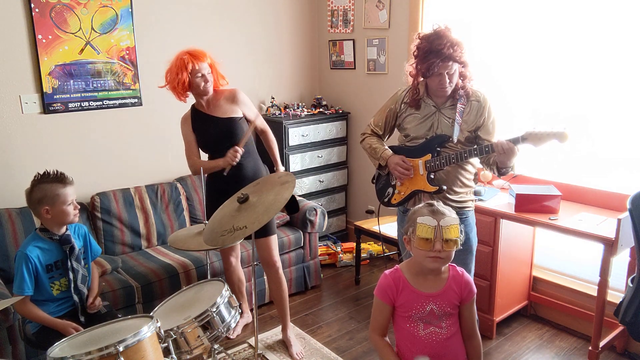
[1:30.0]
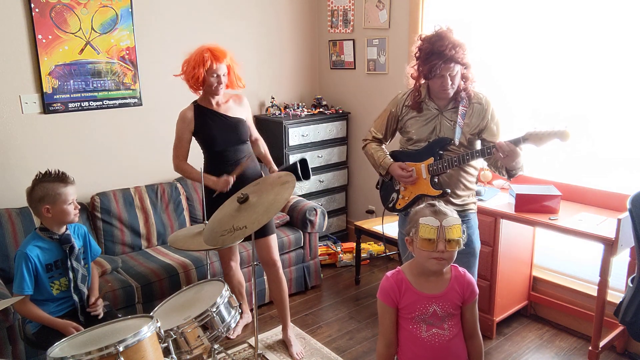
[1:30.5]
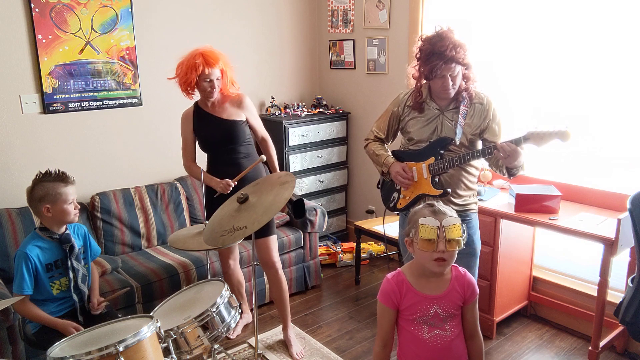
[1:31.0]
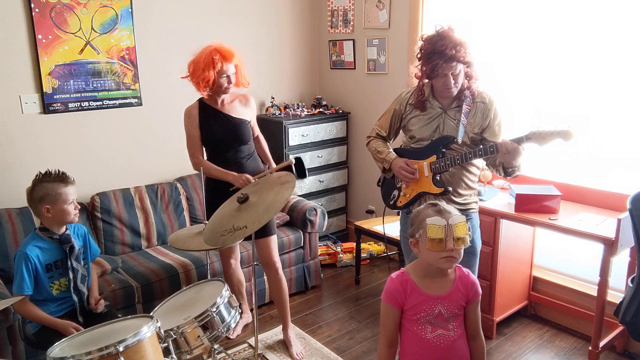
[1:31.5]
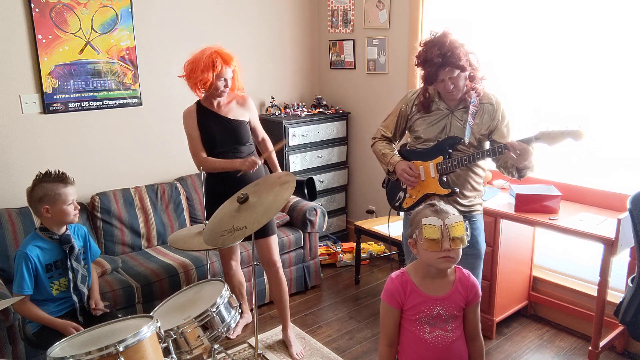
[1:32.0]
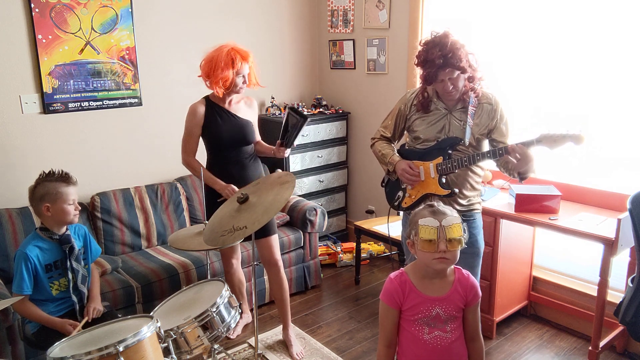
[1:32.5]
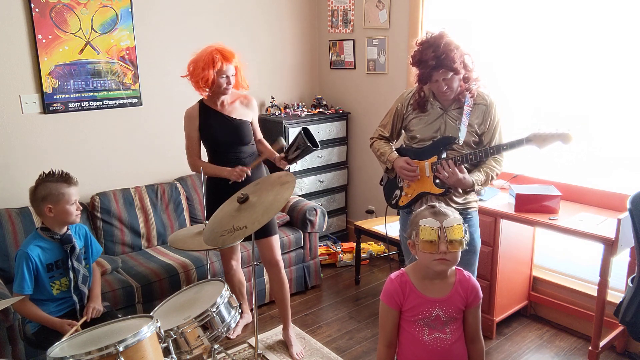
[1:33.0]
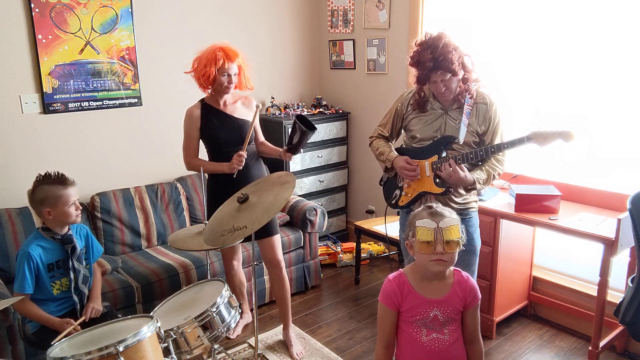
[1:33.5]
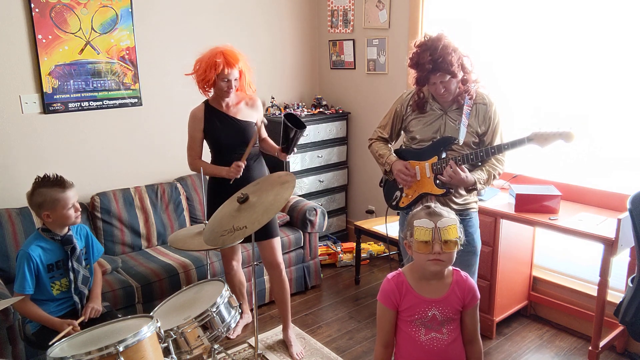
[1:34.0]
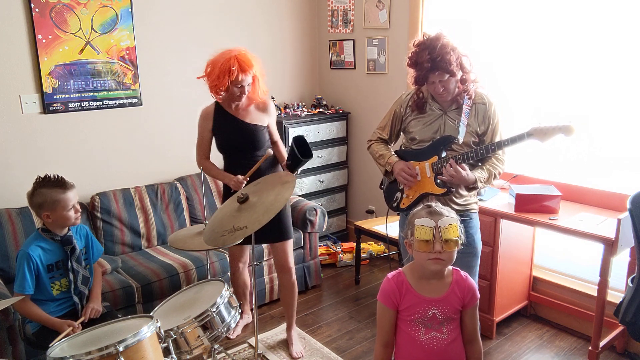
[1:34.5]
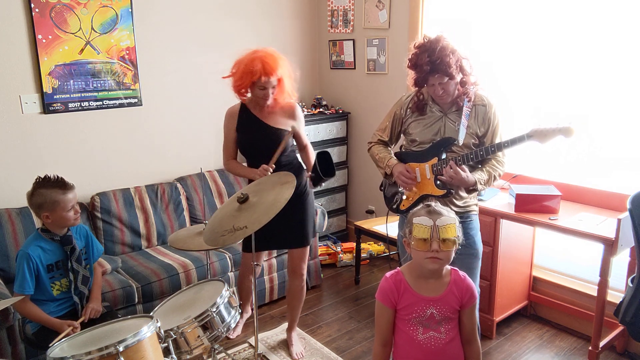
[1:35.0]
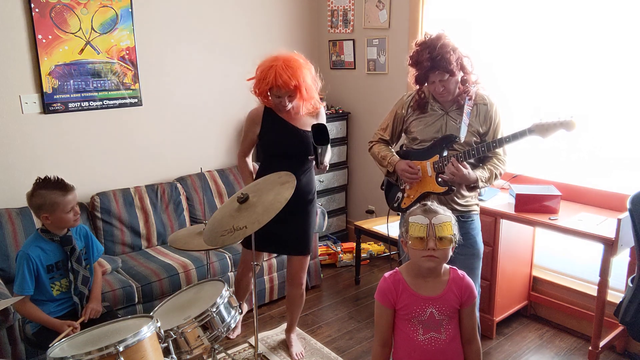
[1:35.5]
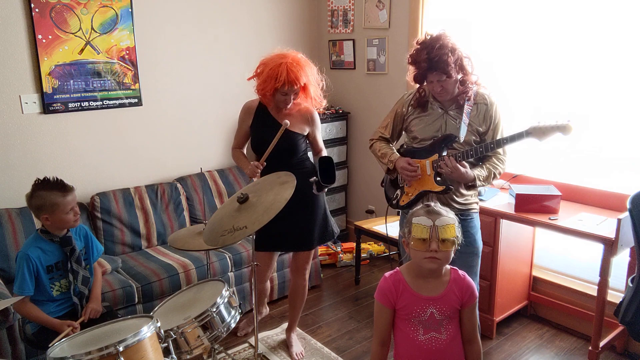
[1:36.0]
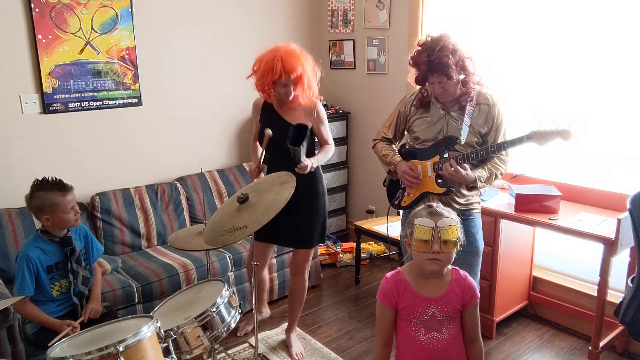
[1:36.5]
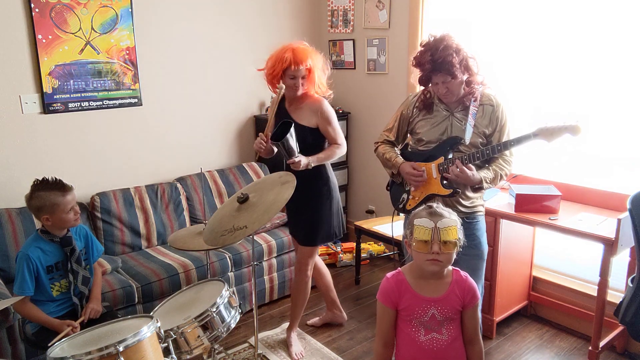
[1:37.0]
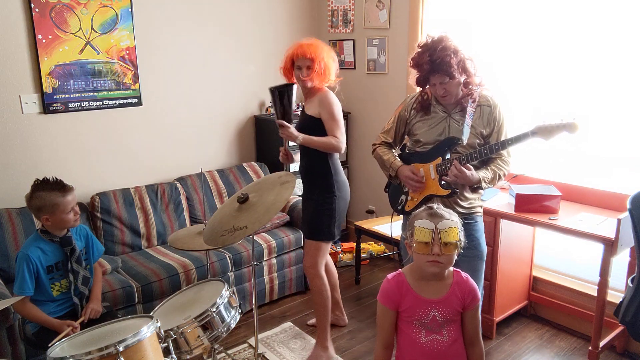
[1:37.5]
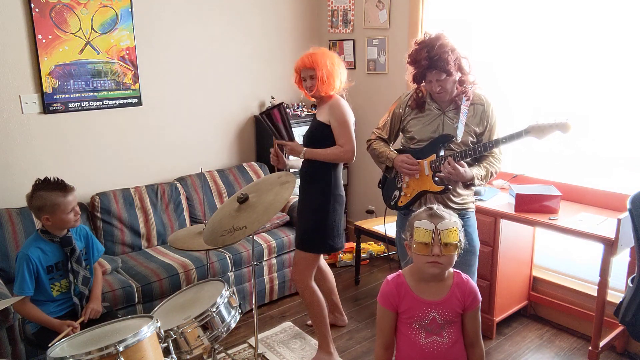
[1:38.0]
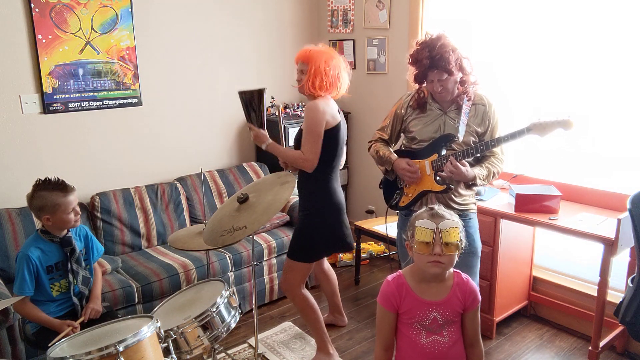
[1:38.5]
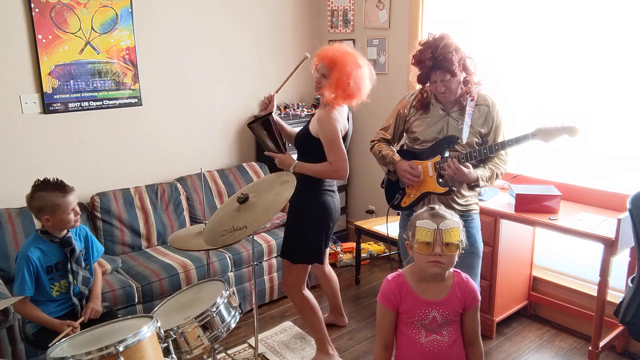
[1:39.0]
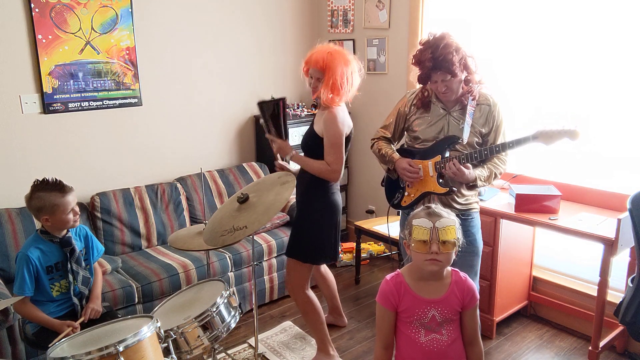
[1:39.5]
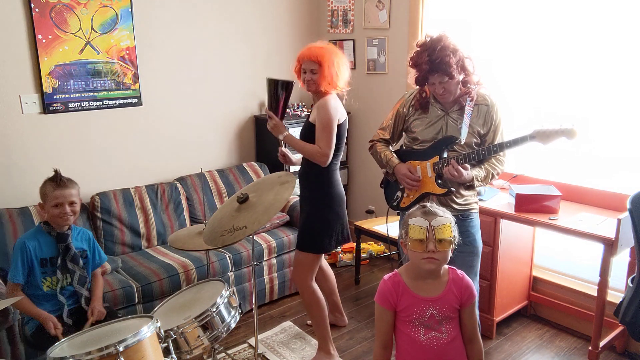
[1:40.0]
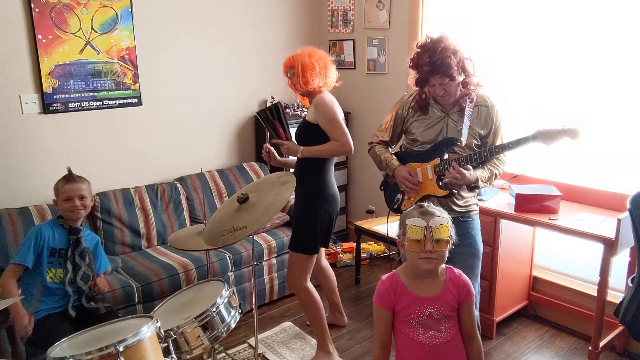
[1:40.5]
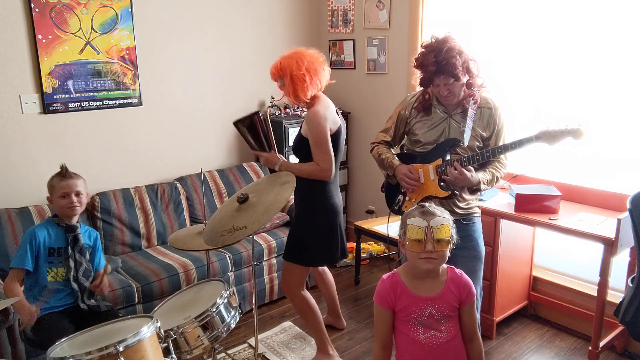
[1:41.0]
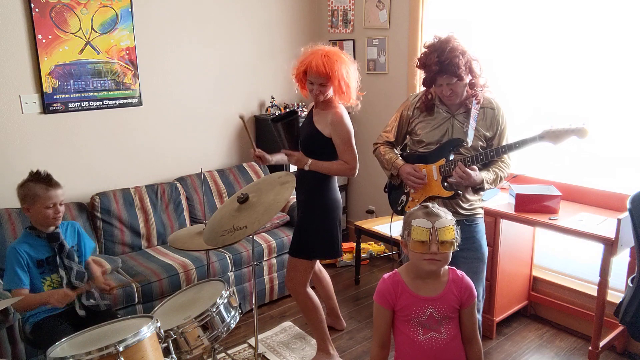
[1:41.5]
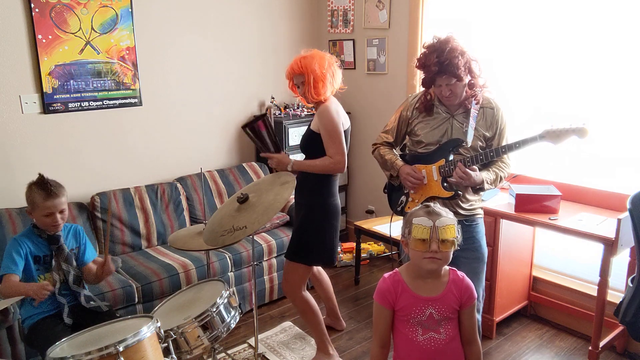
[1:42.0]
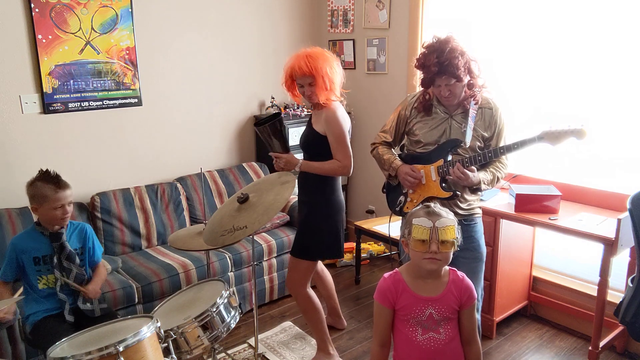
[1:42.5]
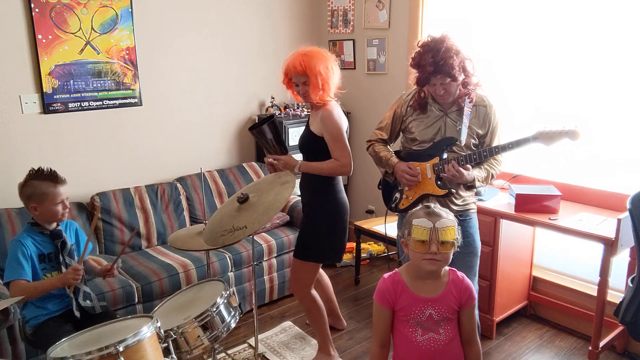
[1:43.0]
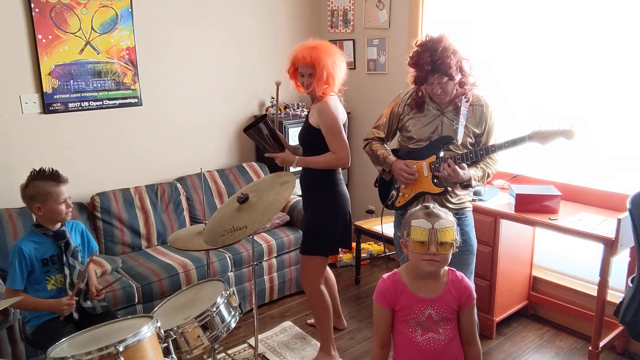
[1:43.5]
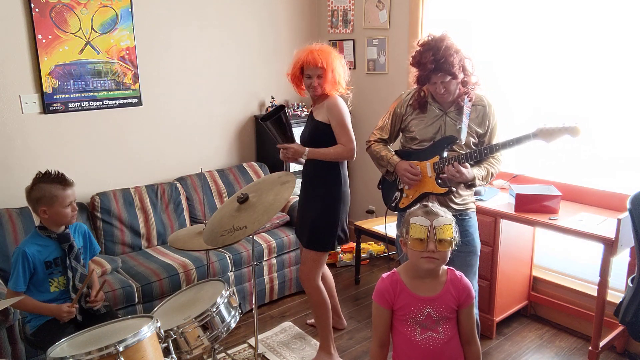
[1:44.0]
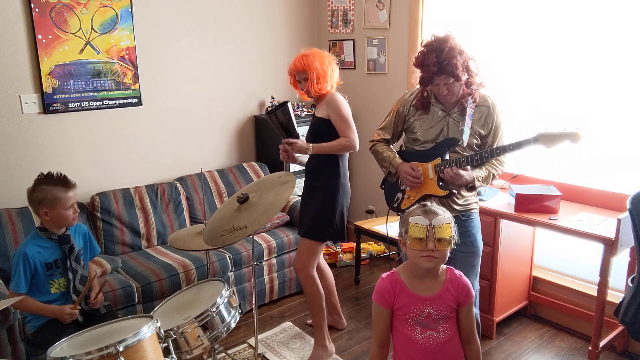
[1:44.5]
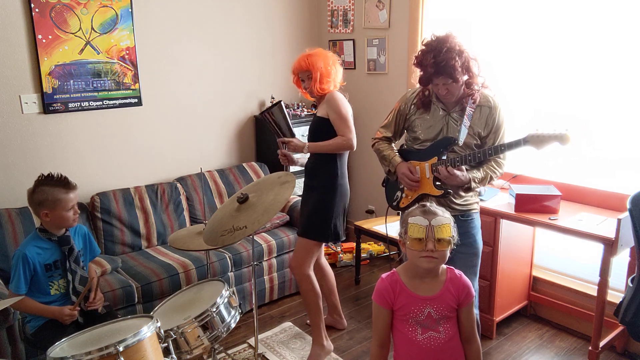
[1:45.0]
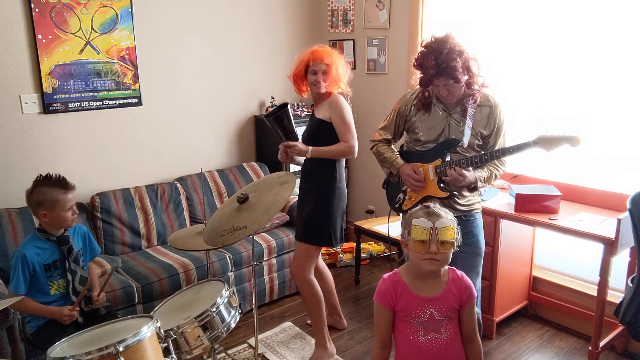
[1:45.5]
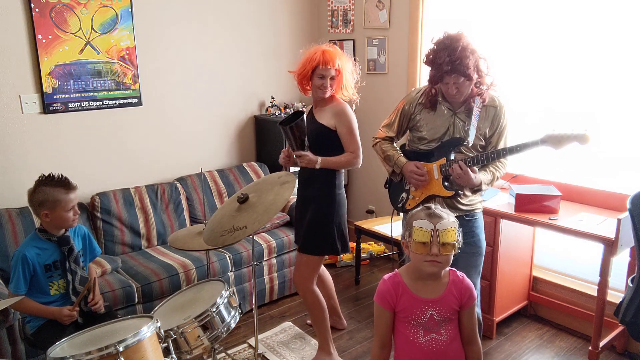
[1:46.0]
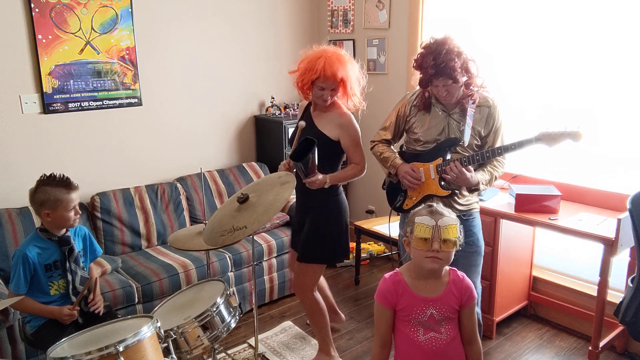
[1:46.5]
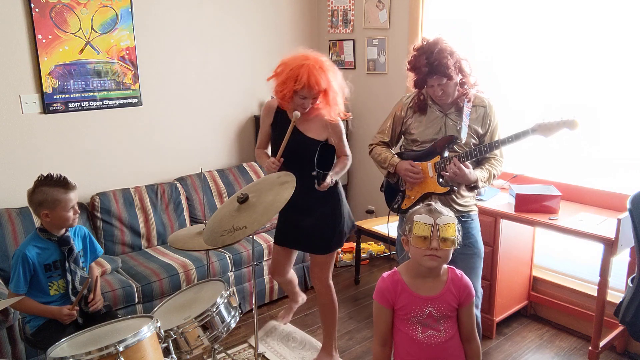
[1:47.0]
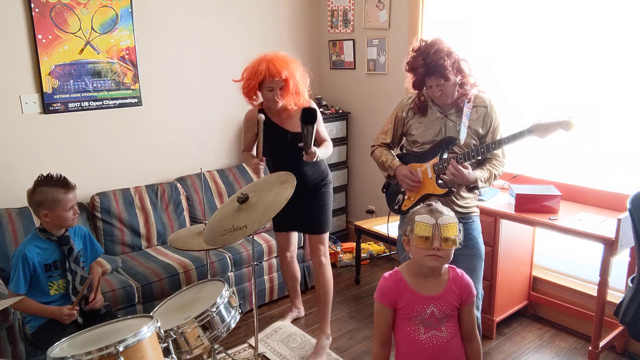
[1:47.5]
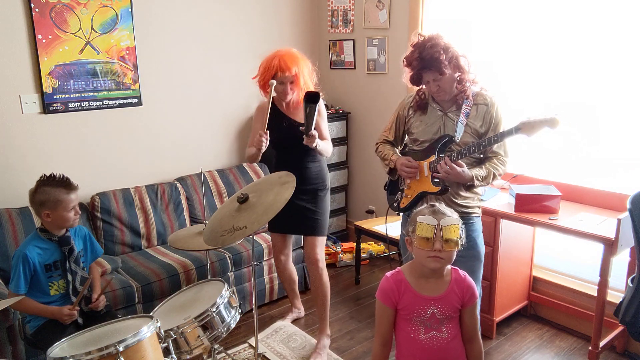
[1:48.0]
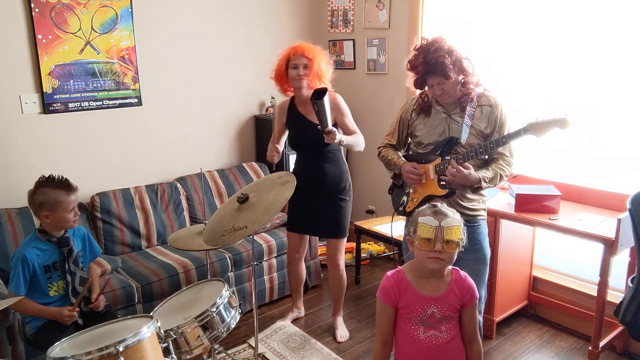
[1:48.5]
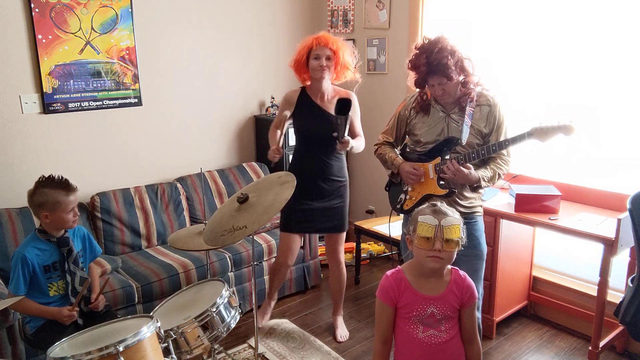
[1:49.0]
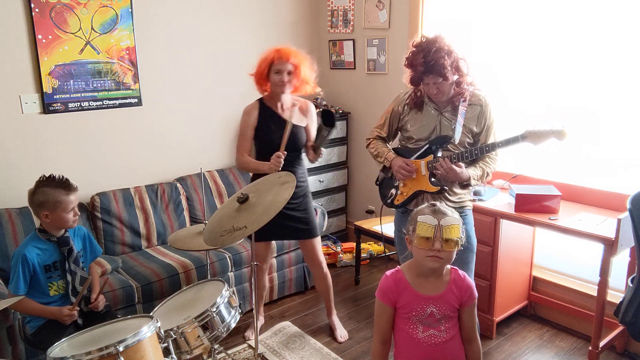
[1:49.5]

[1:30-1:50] The little girl, the singer, is not really singing and just stands there, a little awkwardly. The brother is not really playing the drums anymore and watches the parents. The mom dances, moving a little out of the area she stayed in before and moving around; she seems to be having the most fun of everybody. Her orange wig has bangs in front and is fairly short, a little past her chin, with dark brown or black hair visible underneath. She wears a solid black sleeveless dress with a strap across one side. The mom does the most dancing of everyone. The girl has stopped singing and the boy has stopped playing; the song is possibly over.